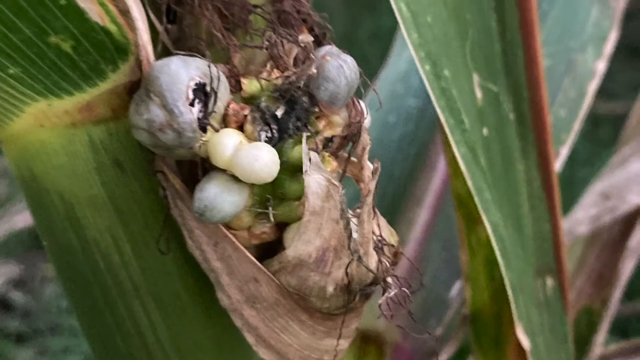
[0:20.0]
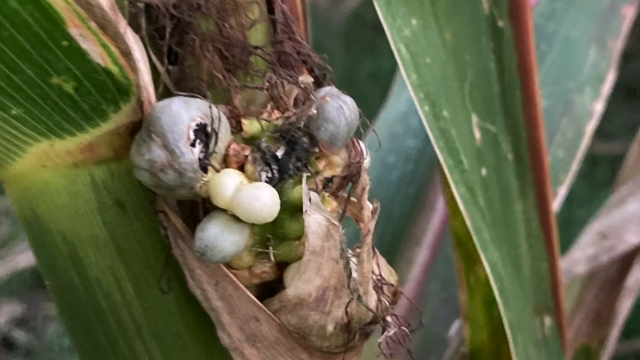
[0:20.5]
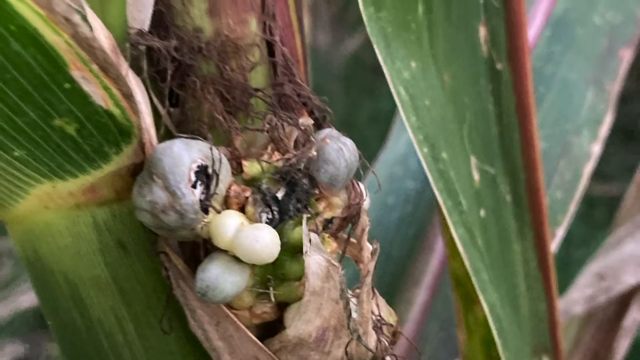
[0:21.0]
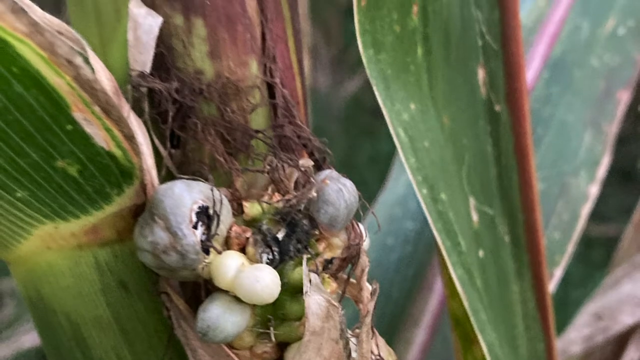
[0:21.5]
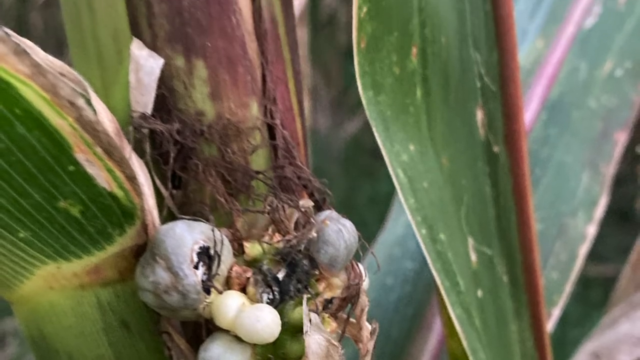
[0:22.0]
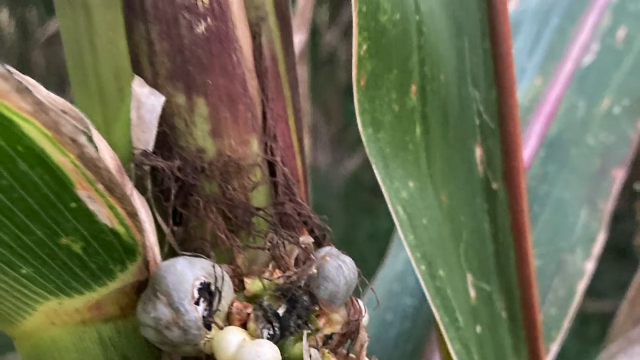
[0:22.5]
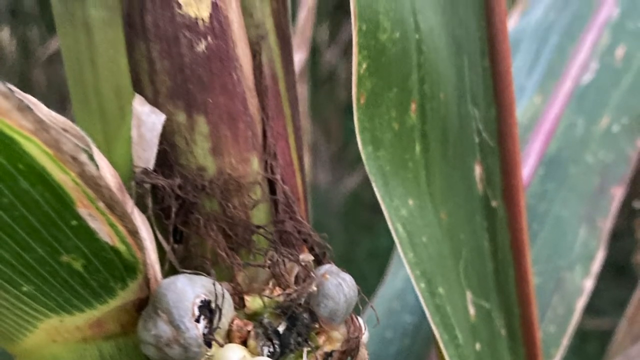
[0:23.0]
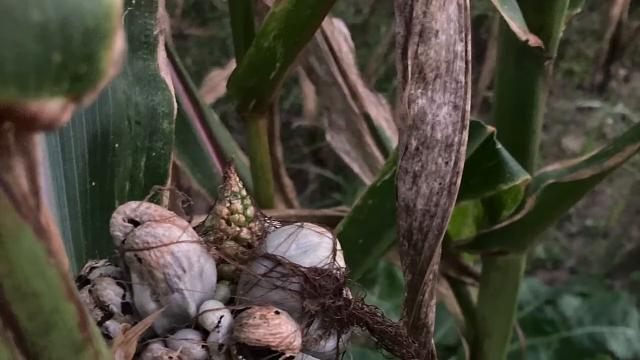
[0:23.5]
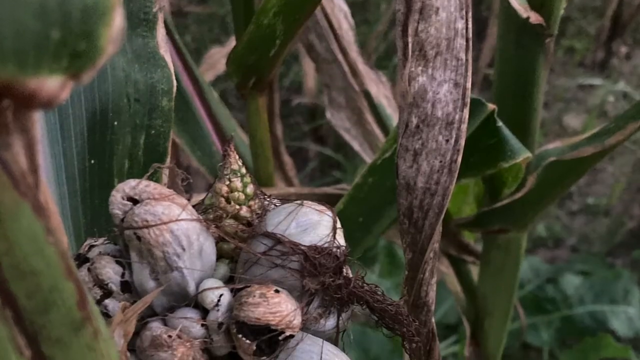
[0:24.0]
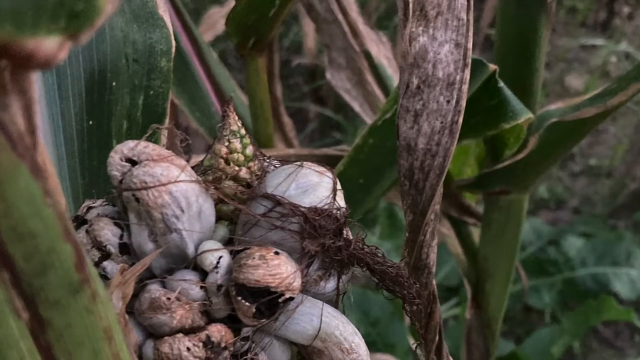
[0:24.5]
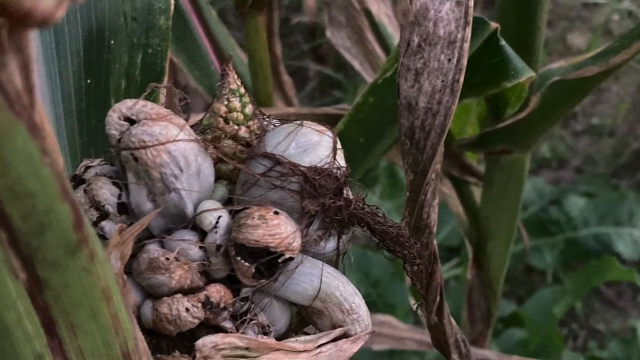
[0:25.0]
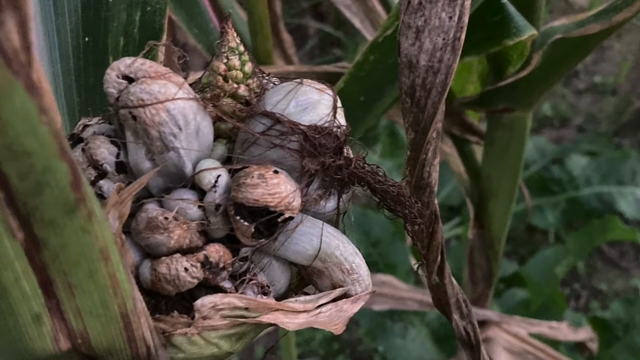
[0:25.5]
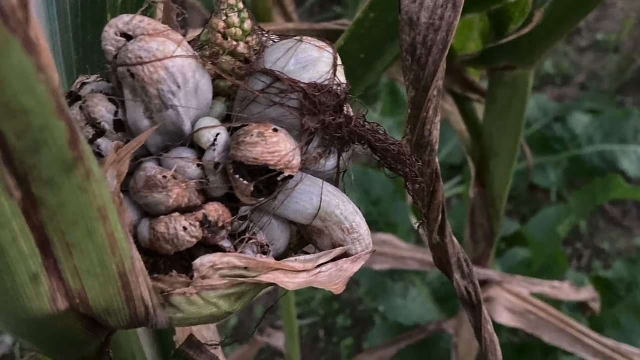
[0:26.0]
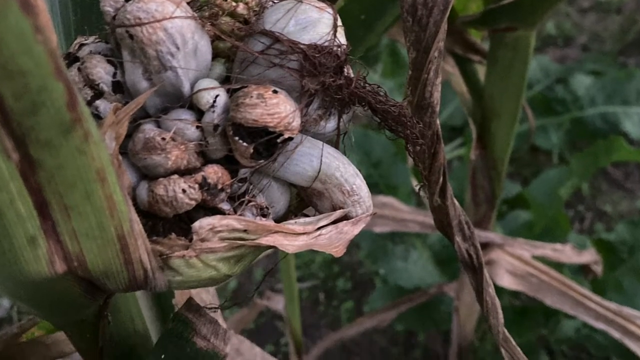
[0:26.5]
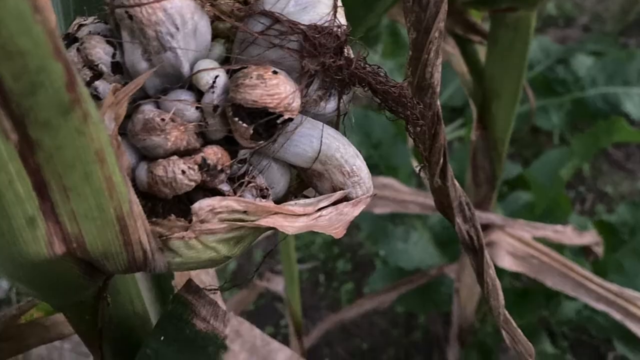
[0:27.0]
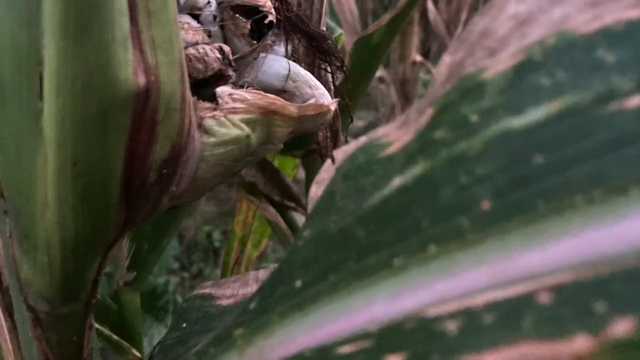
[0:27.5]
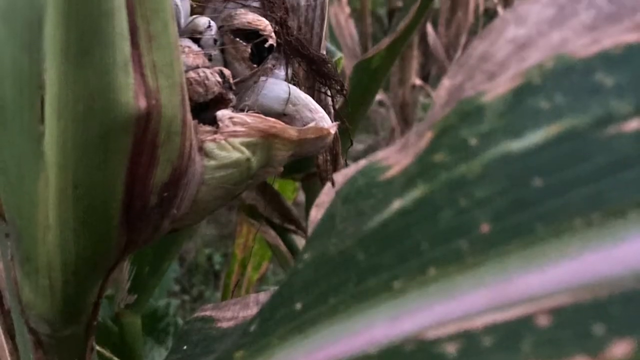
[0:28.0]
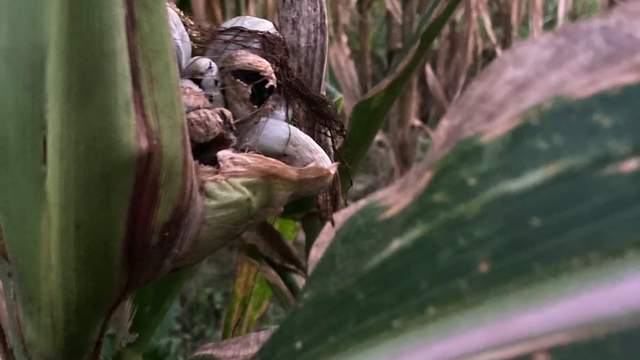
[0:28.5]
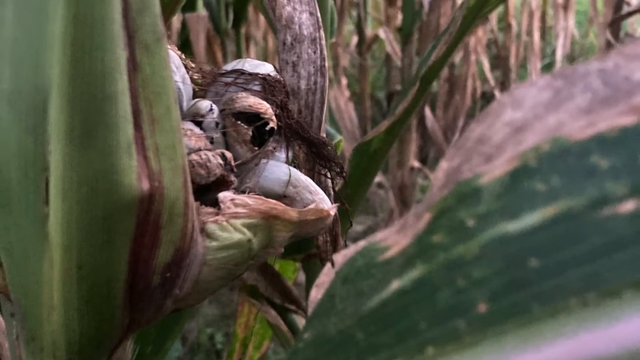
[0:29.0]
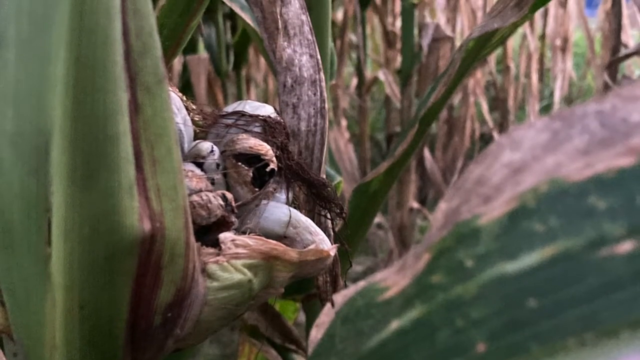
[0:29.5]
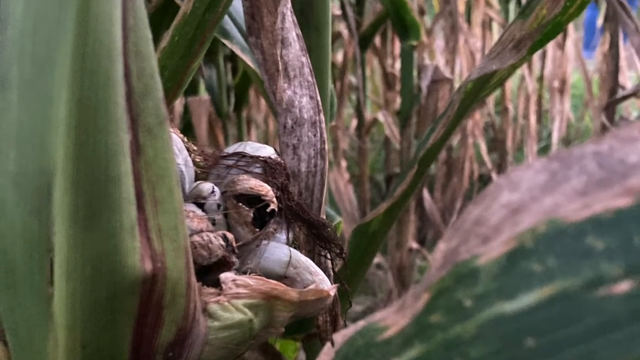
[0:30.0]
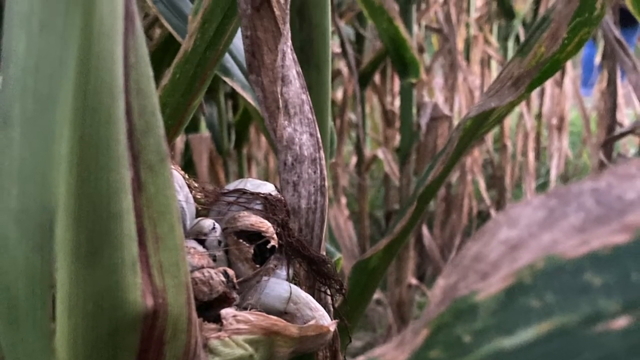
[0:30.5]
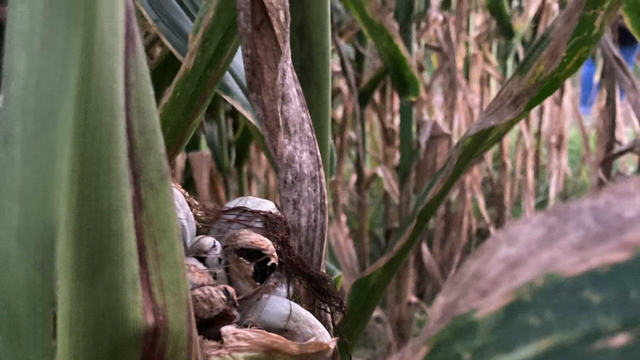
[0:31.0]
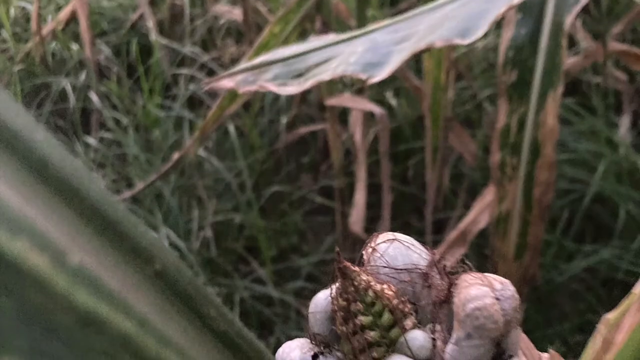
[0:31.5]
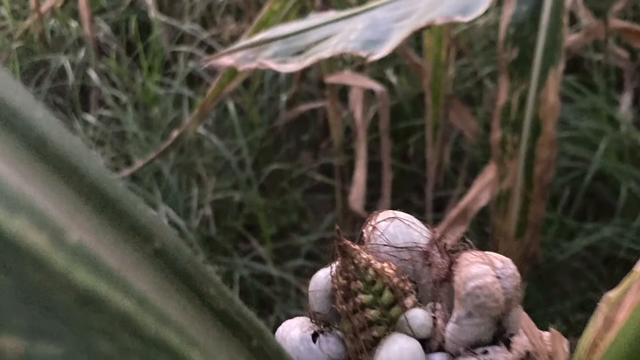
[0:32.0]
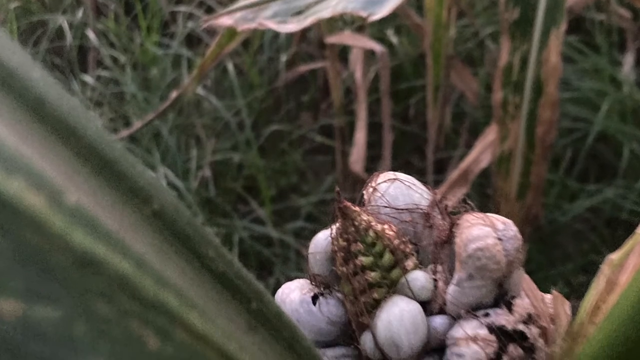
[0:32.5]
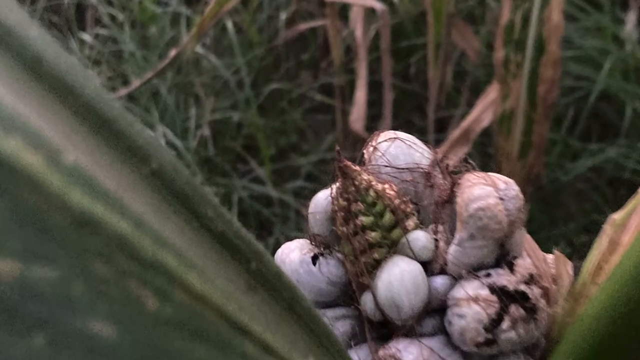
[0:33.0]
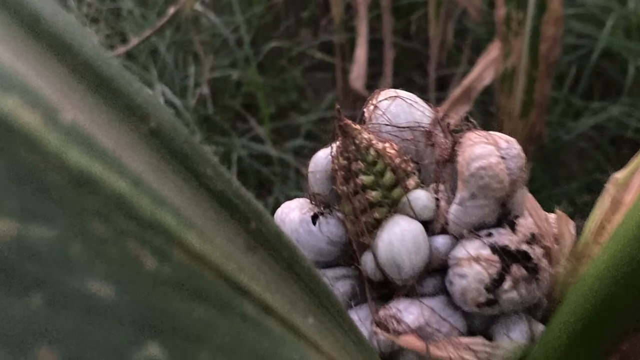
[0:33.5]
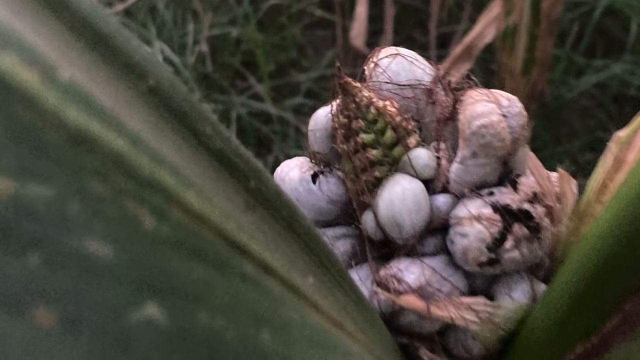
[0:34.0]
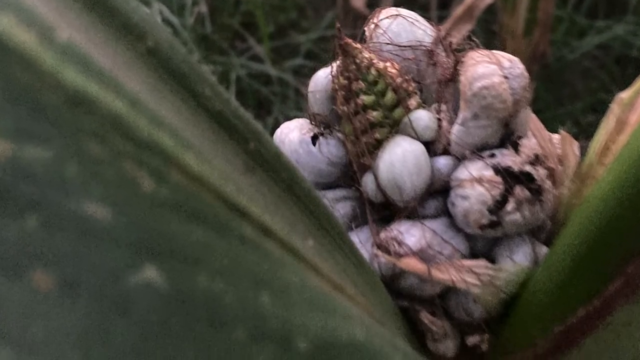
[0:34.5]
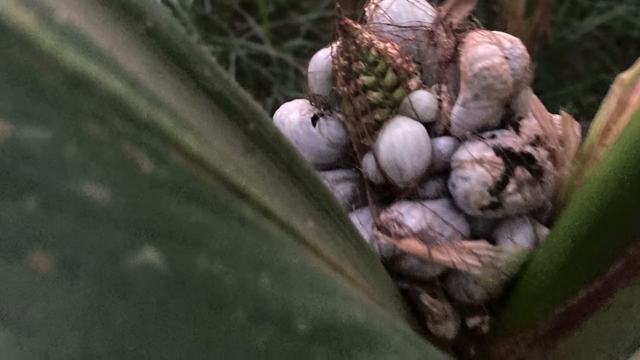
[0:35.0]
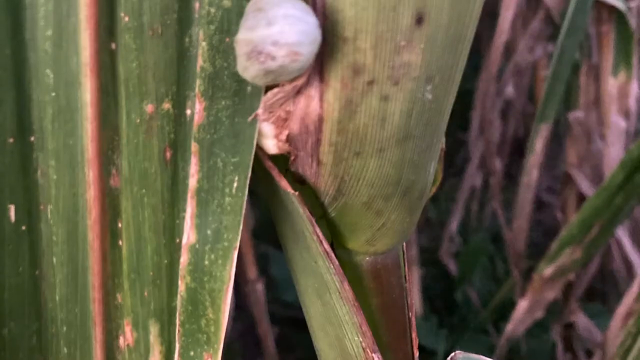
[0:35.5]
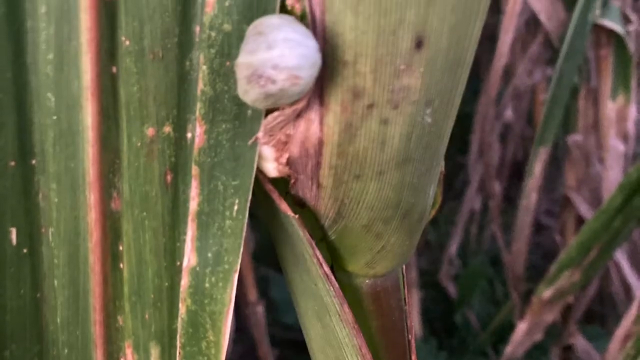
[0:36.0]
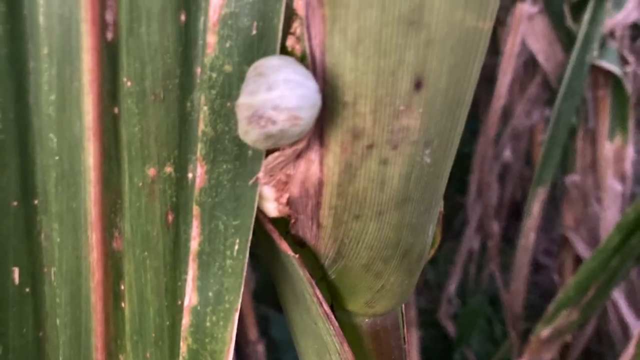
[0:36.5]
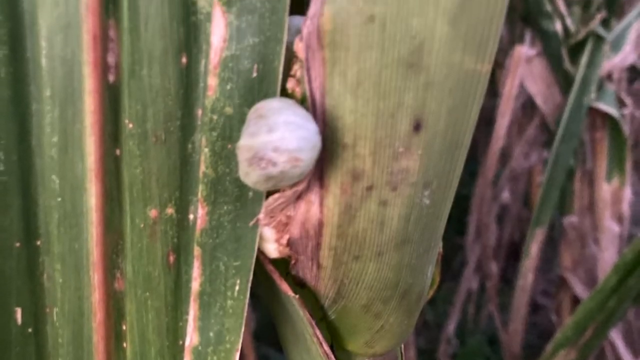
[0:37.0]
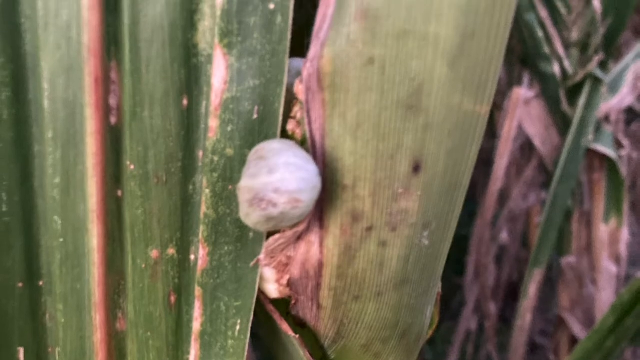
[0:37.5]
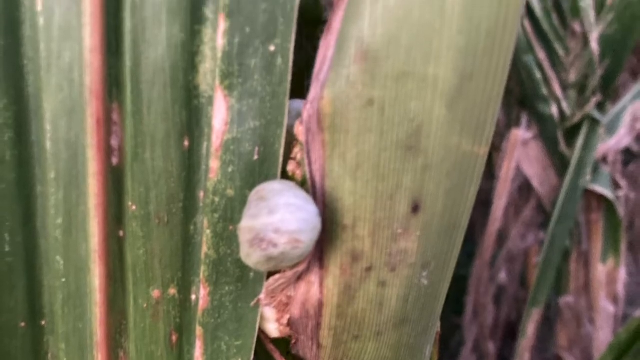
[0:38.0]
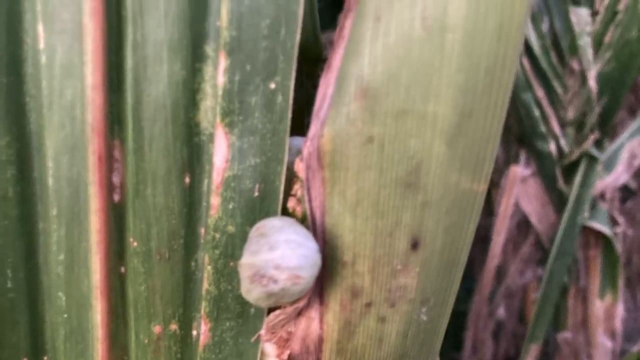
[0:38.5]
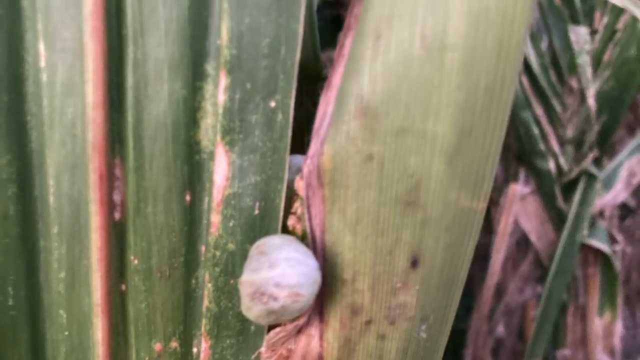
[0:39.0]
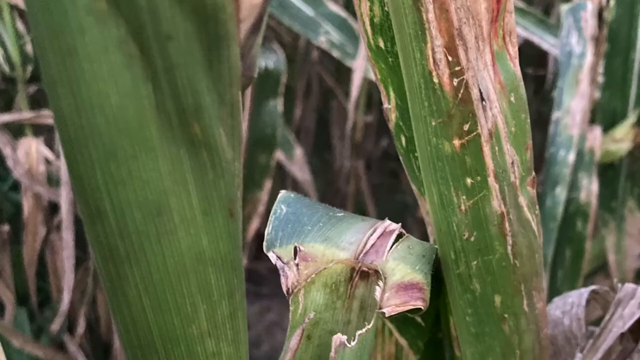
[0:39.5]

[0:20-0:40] More images show corn in a cornfield, and the ears have growths on them. The growths look almost like fungi or giant spider egg sacs, like a burl on a tree transferred to corn, or mushrooms taking root in the corn. In places the corn looks almost exploded. The growths look somewhat like an orb weaver web; they are grayish white and somewhat burst open, resembling cracked chestnut or walnut shells placed inside the corn. The video is titled Corn Smut.